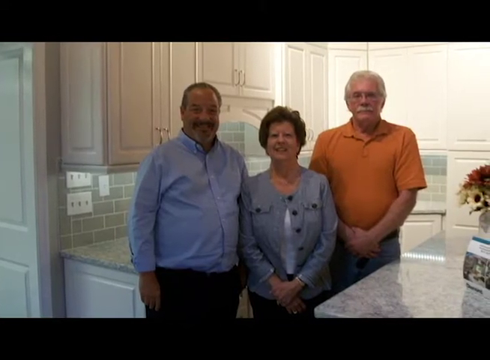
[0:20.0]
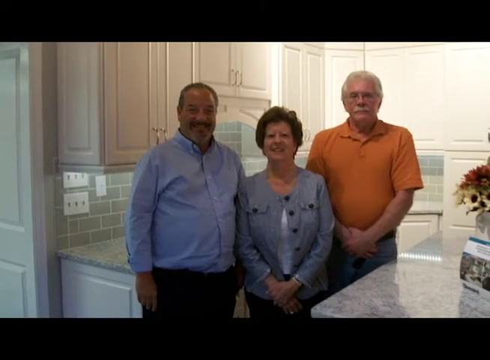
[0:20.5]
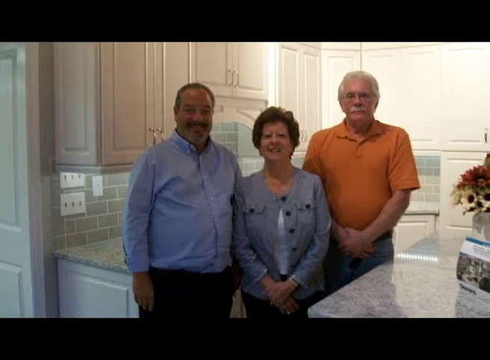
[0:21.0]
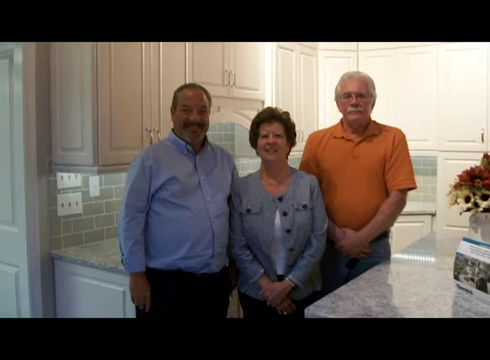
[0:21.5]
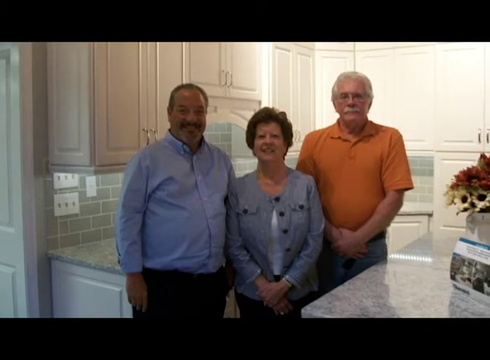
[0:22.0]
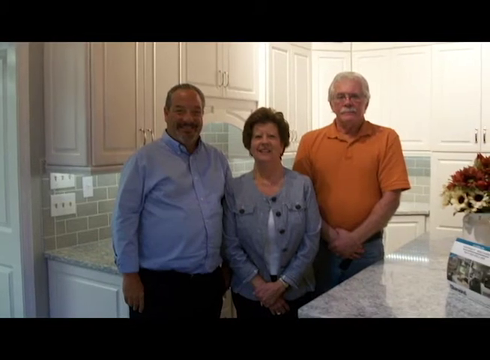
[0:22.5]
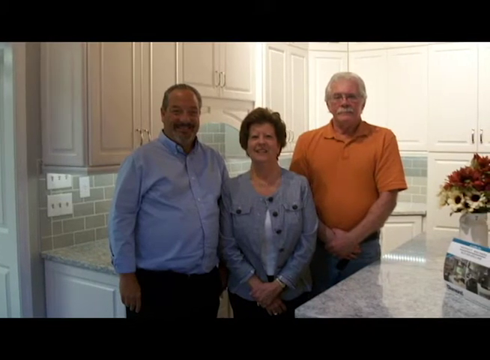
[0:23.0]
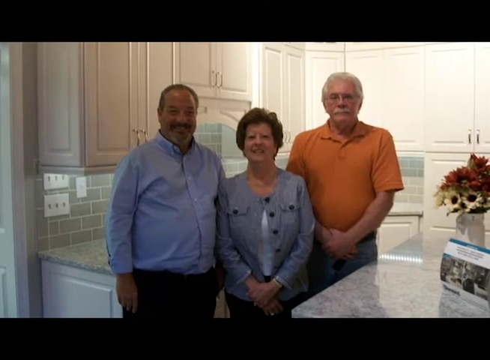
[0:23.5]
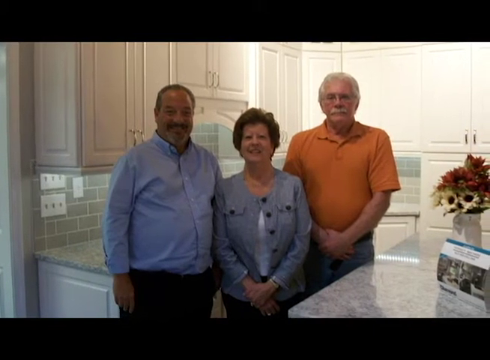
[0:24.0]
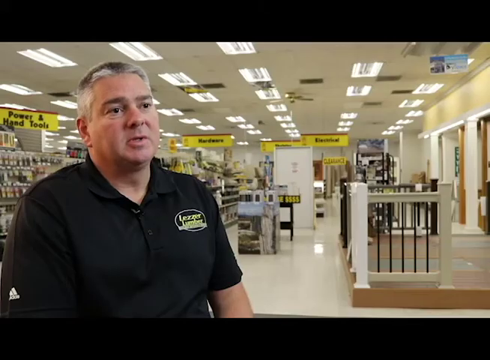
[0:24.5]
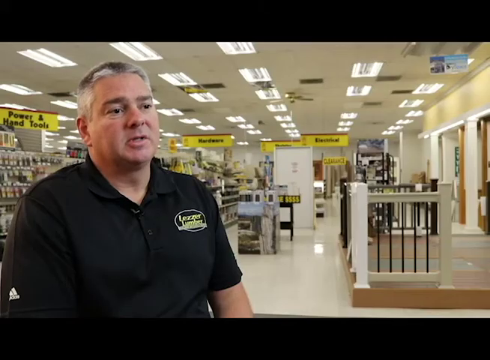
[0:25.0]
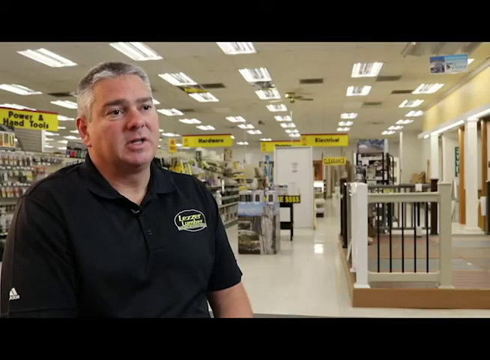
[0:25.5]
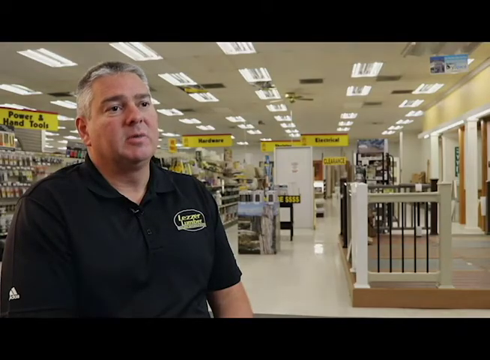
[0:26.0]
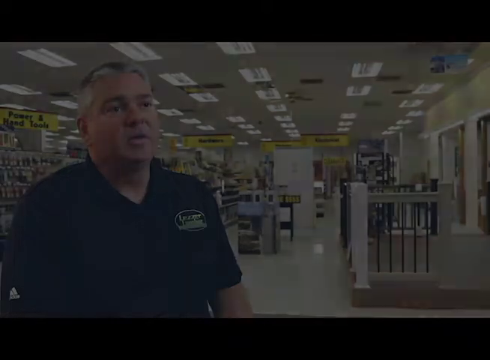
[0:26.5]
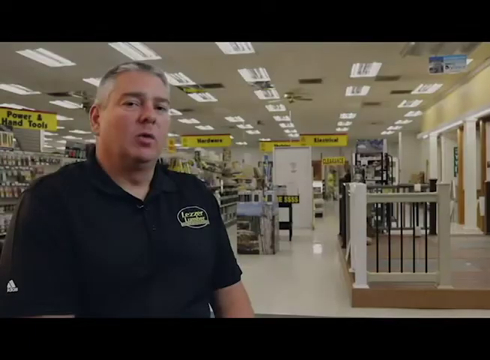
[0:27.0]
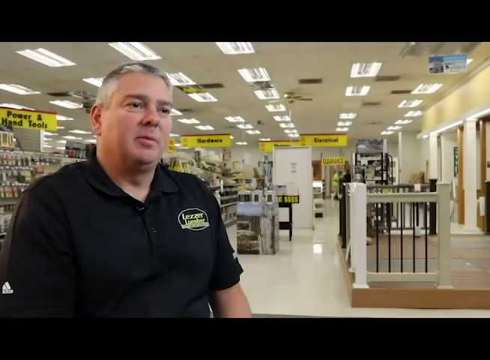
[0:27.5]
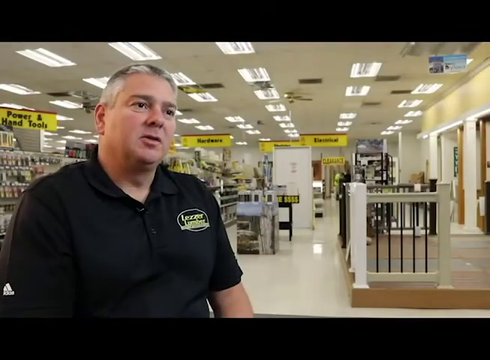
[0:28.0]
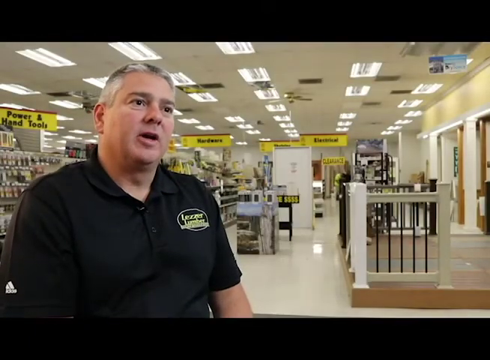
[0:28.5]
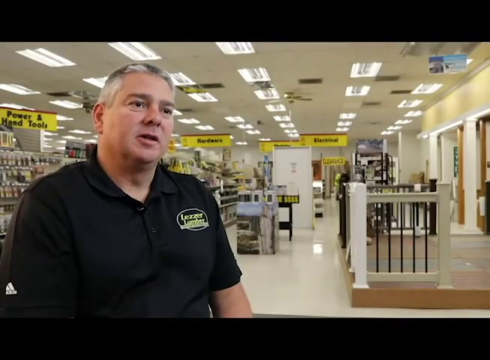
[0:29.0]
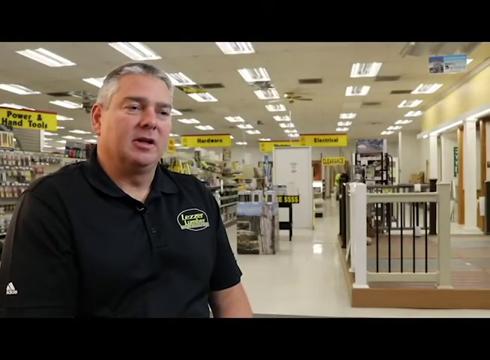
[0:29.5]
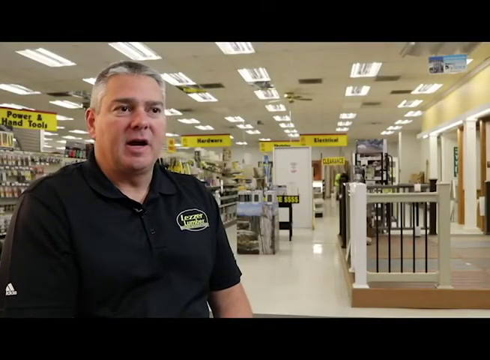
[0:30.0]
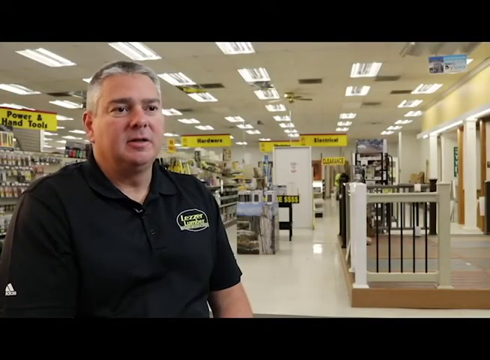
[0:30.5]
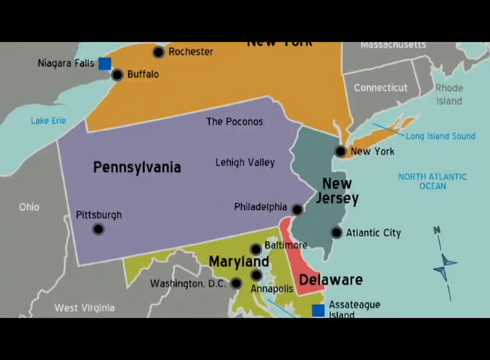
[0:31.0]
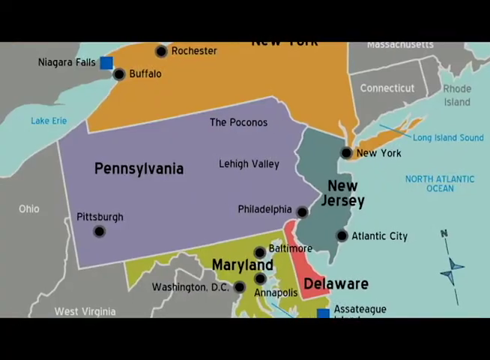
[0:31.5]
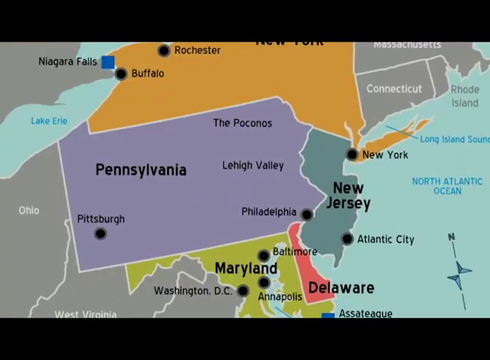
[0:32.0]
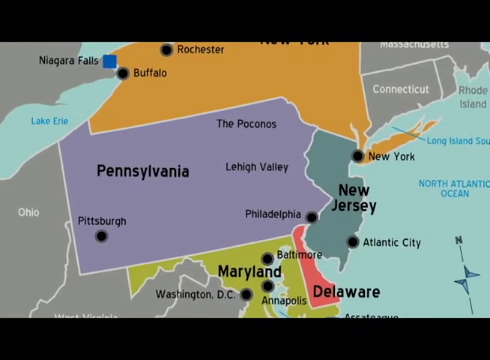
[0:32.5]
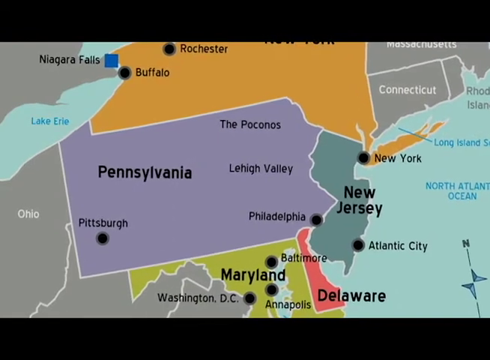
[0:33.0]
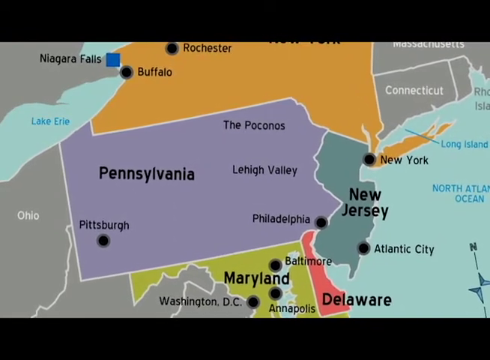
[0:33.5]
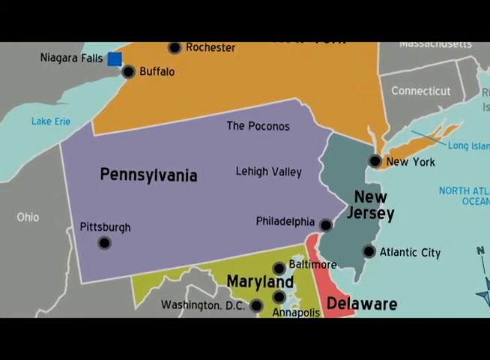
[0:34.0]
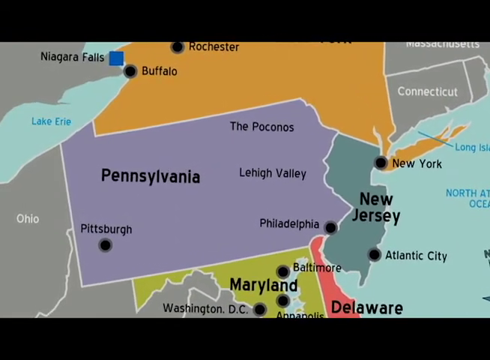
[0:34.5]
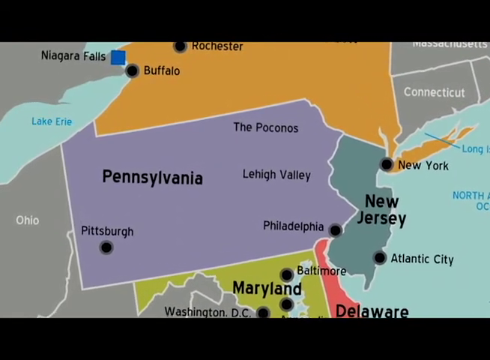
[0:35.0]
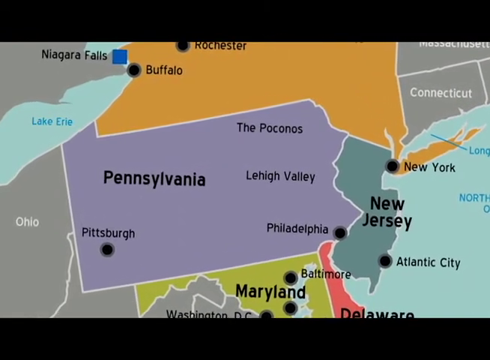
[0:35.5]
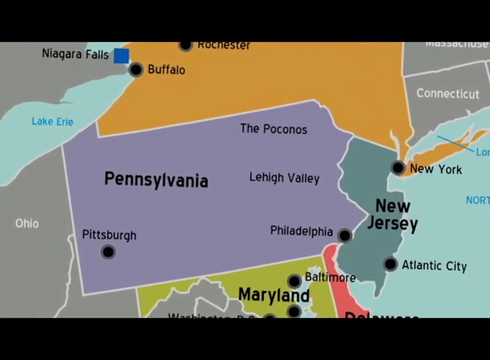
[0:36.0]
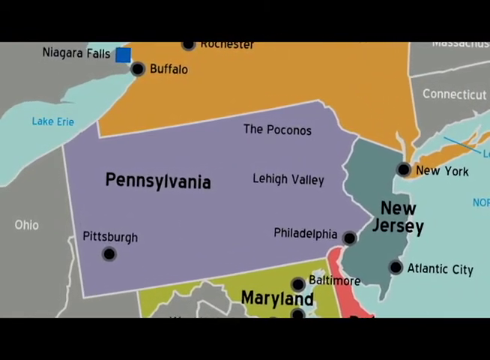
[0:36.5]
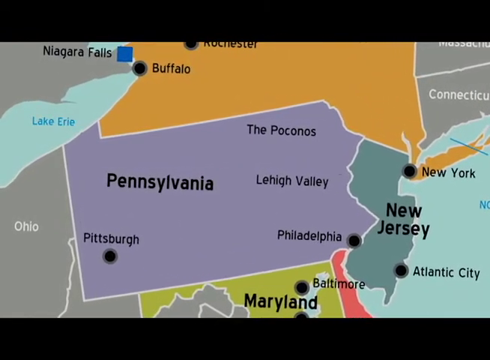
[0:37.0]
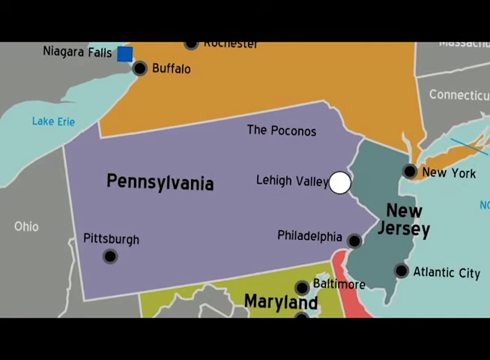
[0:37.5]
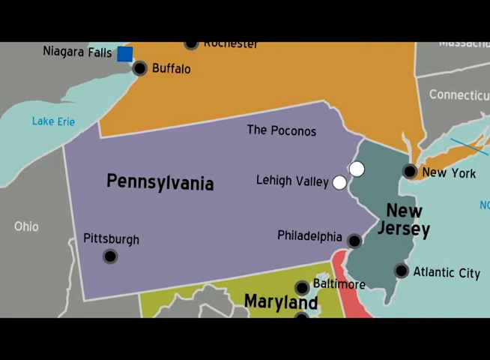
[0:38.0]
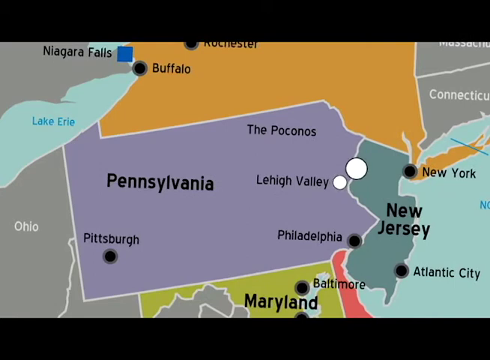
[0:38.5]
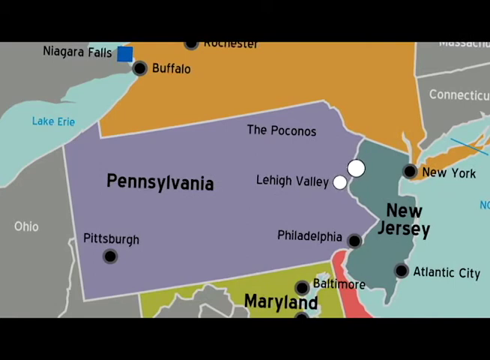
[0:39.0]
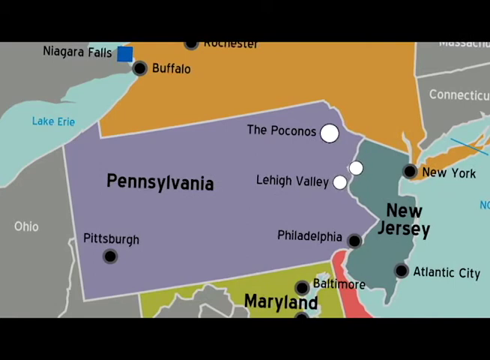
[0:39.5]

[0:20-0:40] Three people stand inside a kitchen: a man in a blue shirt, a woman in a long light gray shirt, and a man in an orange shirt. There are flowers to the right of them. It is a still picture, and they are standing in front of a kitchen that looks relatively empty. The shot returns to the man in the black shirt inside the lumber store, who is talking to somebody off camera. The screen goes black and then goes back to him. Next comes a close-up of a map of the United States focused on New York, Pennsylvania, Maryland and New Jersey. Black dots mark cities such as Pittsburgh, Buffalo, Rochester, New York, Atlantic City, Baltimore, Washington DC and Annapolis, and a blue square marks Niagara Falls. On the right-hand side is the Atlantic Ocean, and a blue area signifies Lake Erie.